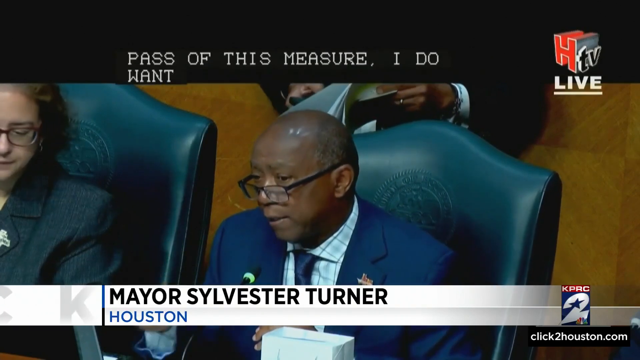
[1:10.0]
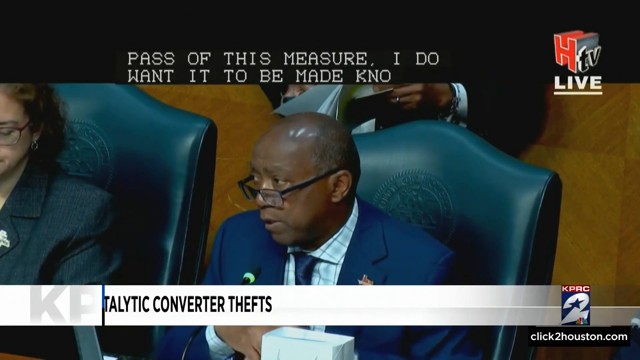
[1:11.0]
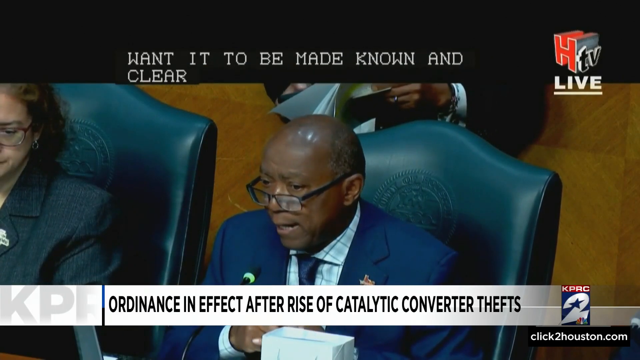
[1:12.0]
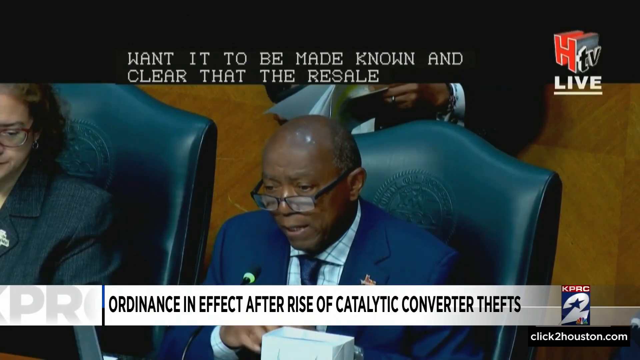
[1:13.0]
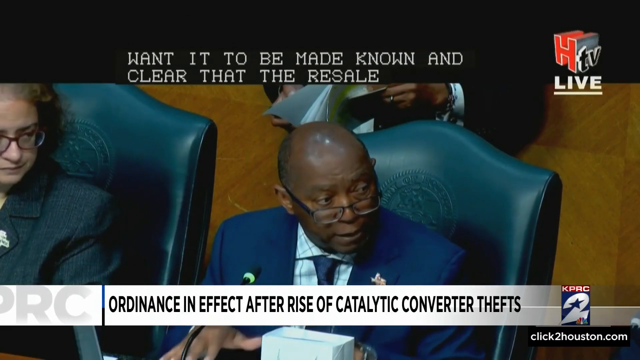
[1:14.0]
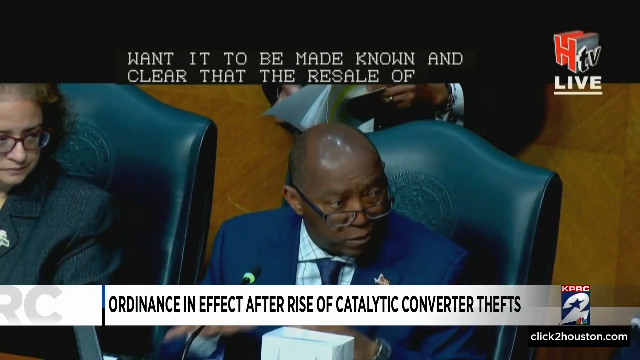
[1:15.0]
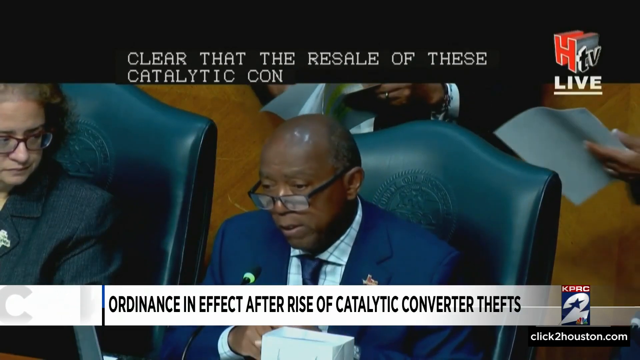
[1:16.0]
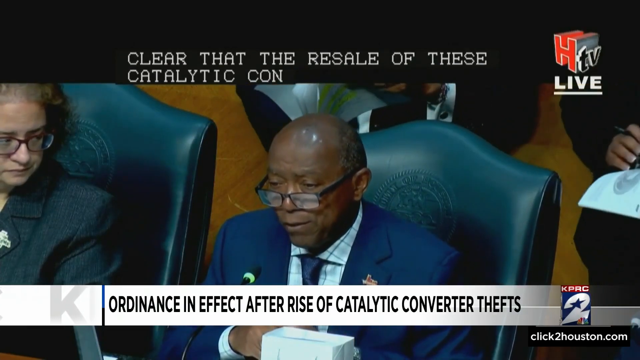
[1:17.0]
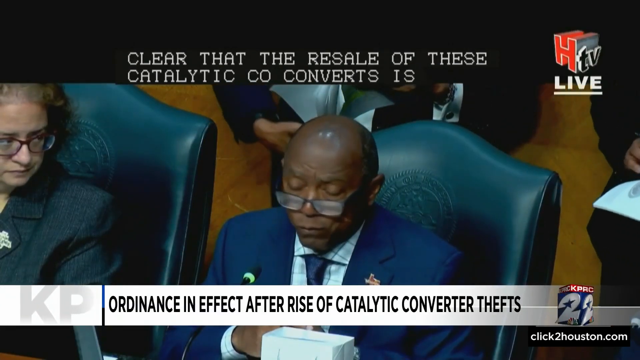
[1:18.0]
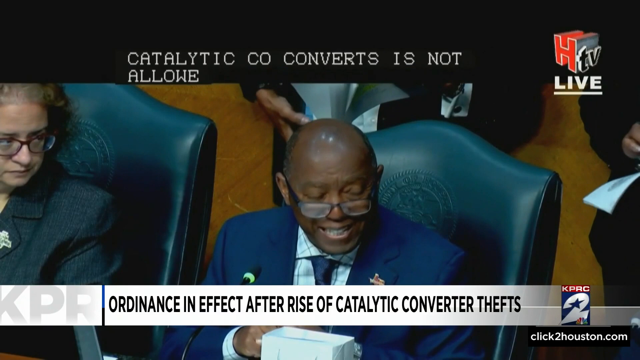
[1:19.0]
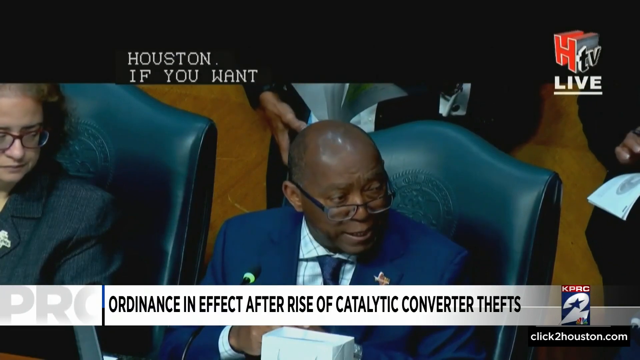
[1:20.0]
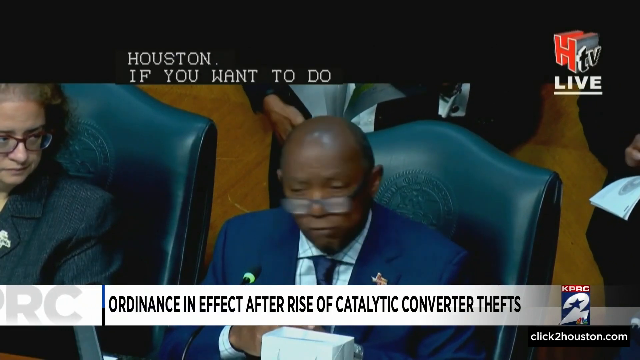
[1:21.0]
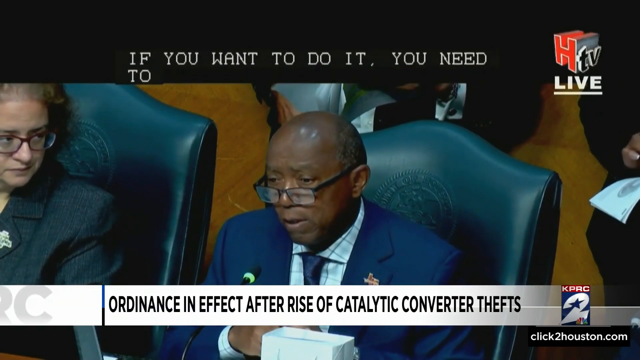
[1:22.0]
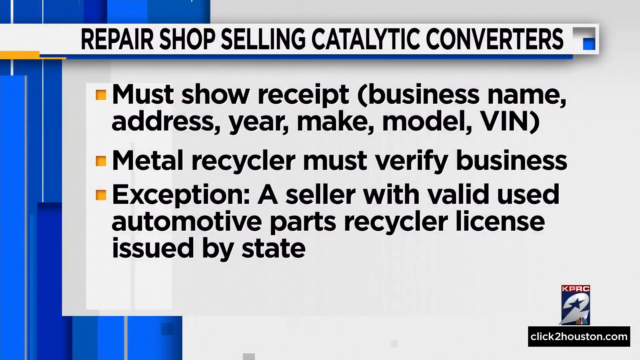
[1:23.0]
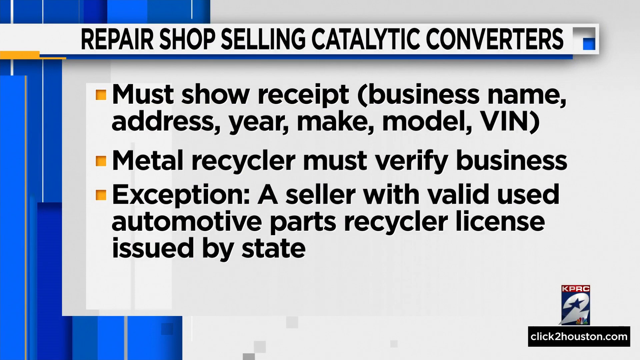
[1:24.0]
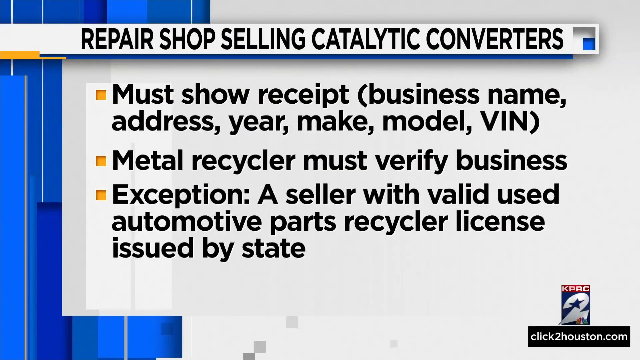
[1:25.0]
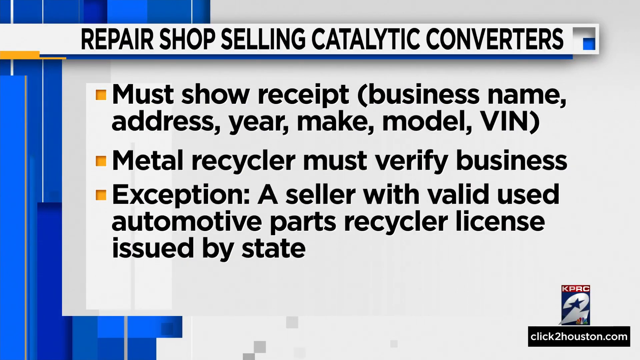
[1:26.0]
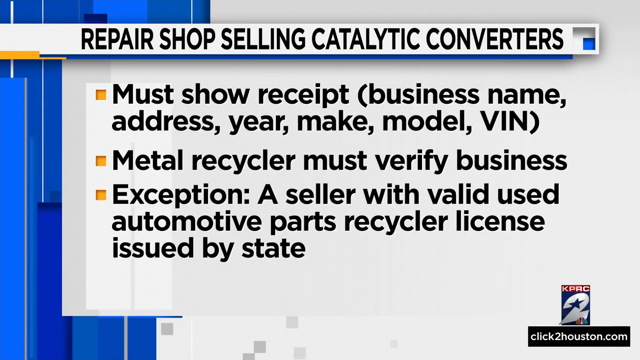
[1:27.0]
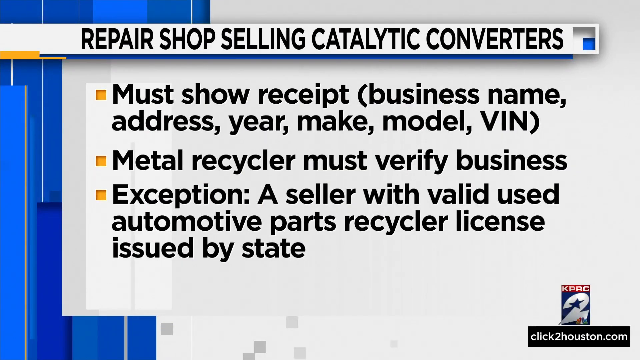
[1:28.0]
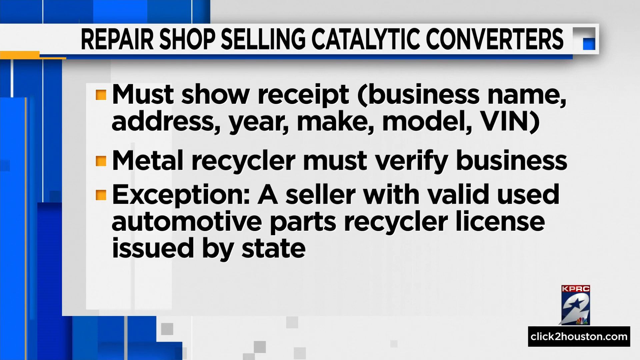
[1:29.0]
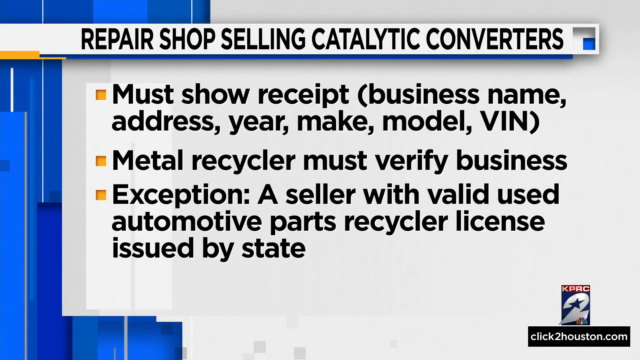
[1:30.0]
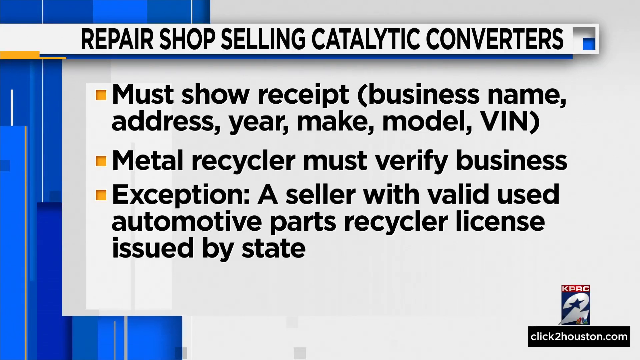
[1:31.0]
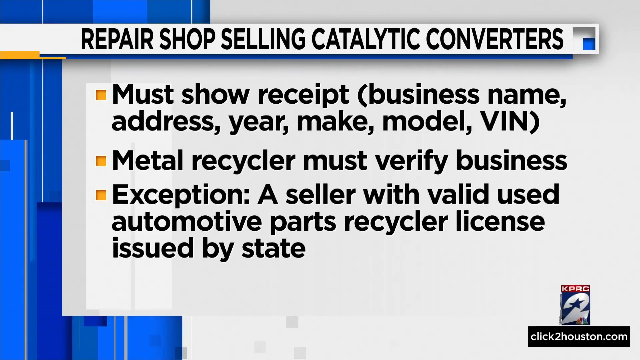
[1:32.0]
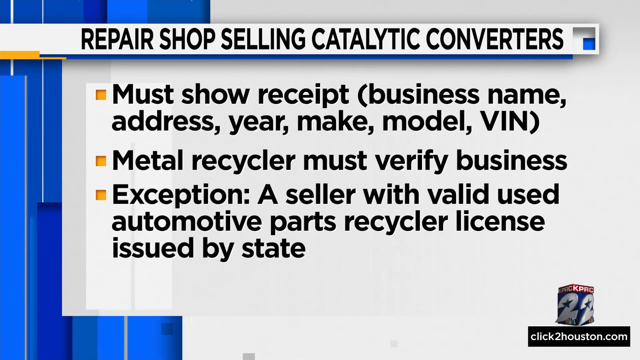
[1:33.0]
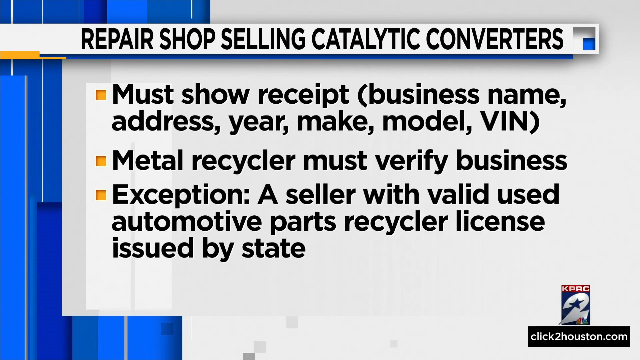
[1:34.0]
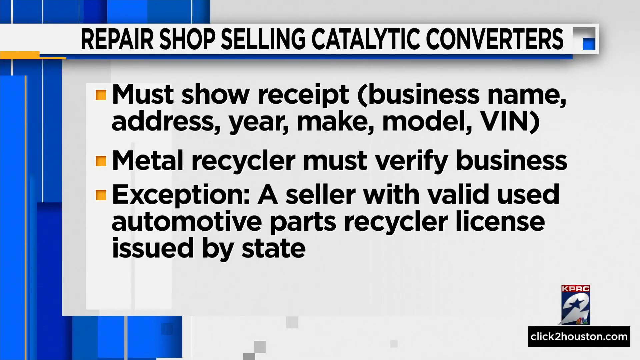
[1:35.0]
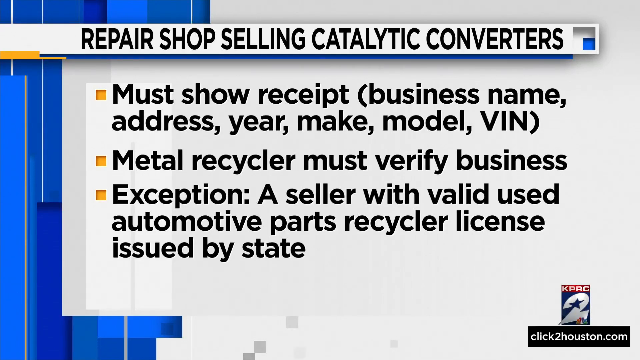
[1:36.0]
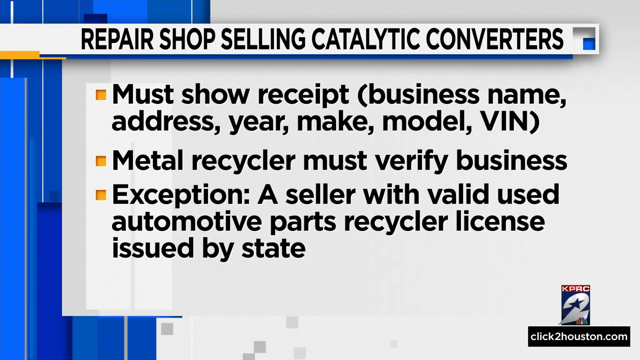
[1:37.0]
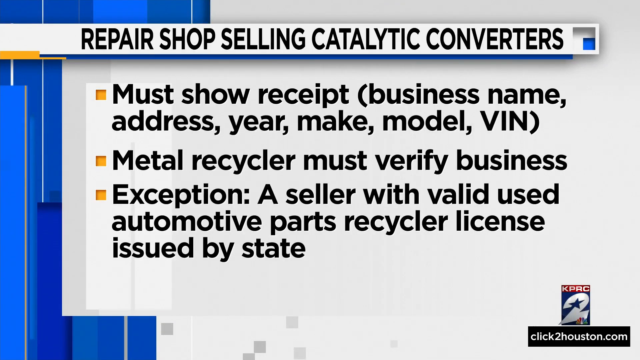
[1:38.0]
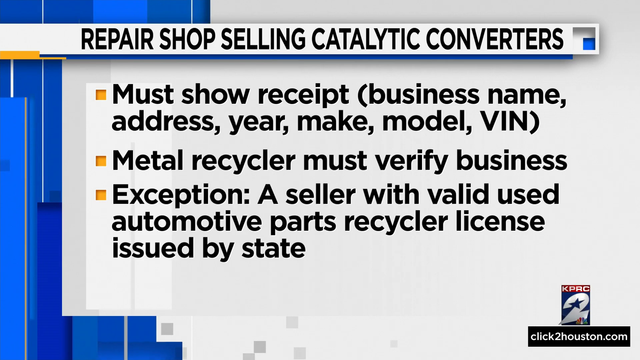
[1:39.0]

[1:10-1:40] Text reads "Mayor Sylvester Turner Houston", the top right says "HTV live", and the bottom still reads "ordinance in effect after rise of catalytic converter thefts". Sylvester Turner is an older African-American man wearing a blue suit with a blue tie. To his left, a woman appears to be staring at him as he speaks. People behind the mayor hold pieces of paper with some passages highlighted. He speaks into a microphone in front of him, and the backrest of his chair seems to have a seal reading "City of Houston". The news then shows a graphic titled "repair shop selling catalytic converters" with three bullet points: "must show receipt", "metal recycler must verify business", and "exception a seller with valid used automotive parts recycler license issued by state".